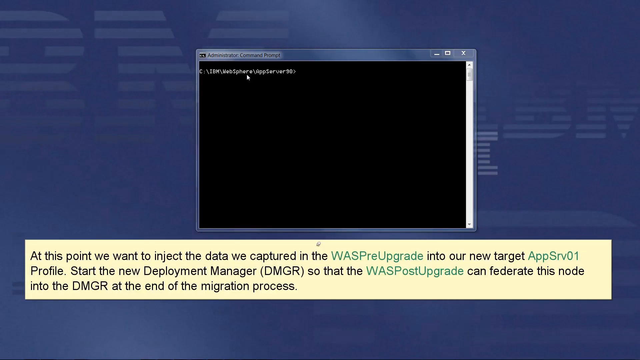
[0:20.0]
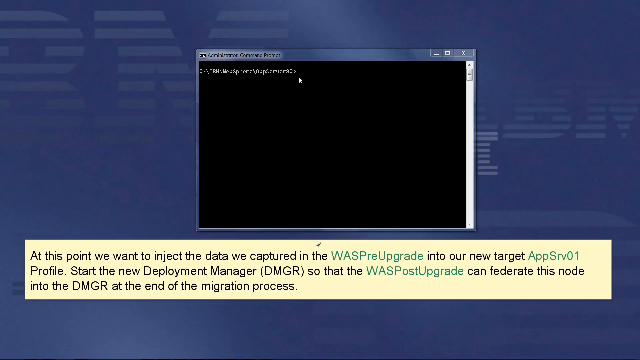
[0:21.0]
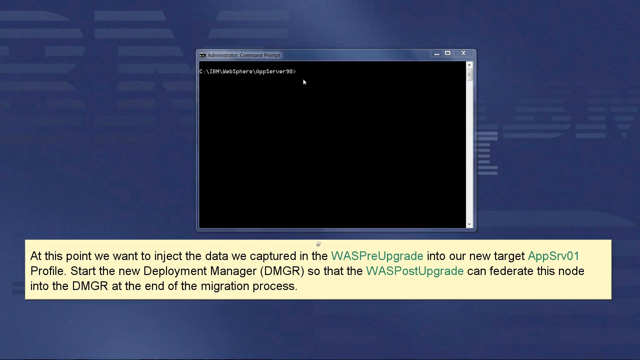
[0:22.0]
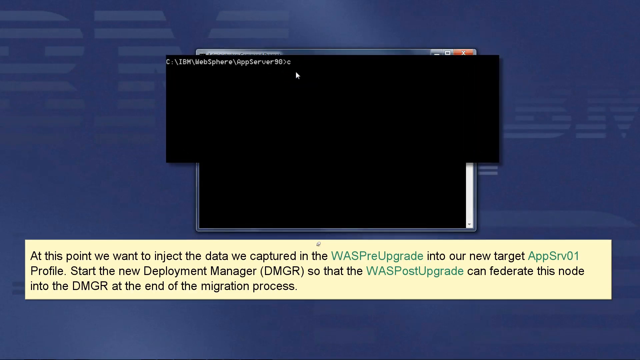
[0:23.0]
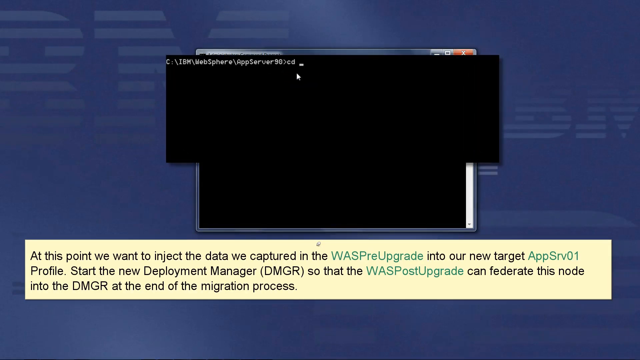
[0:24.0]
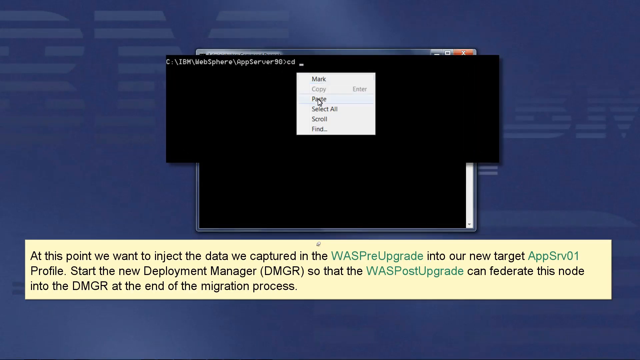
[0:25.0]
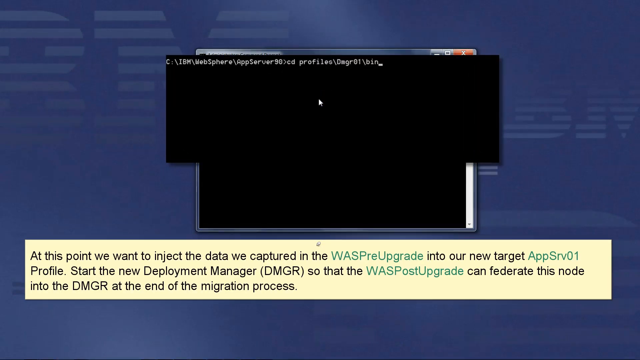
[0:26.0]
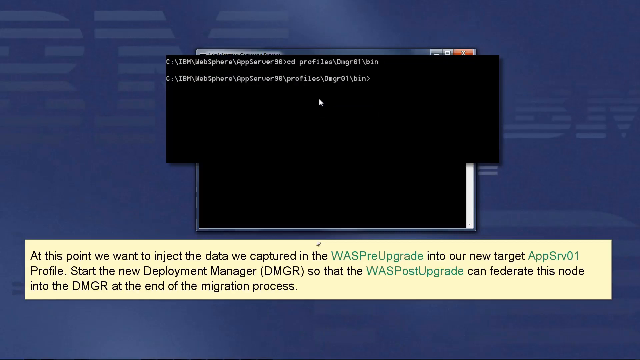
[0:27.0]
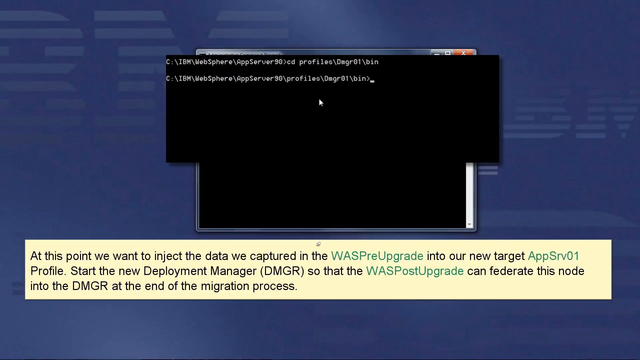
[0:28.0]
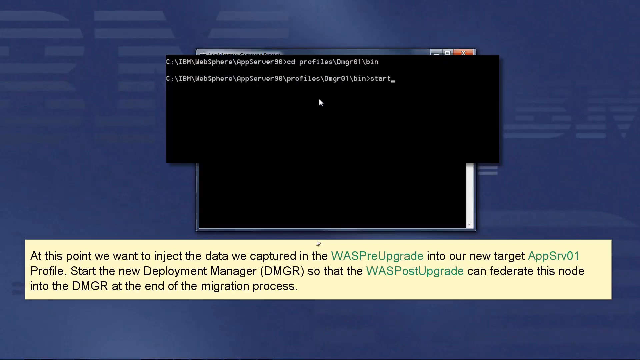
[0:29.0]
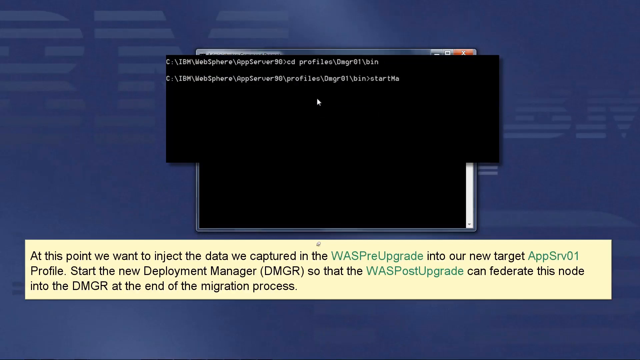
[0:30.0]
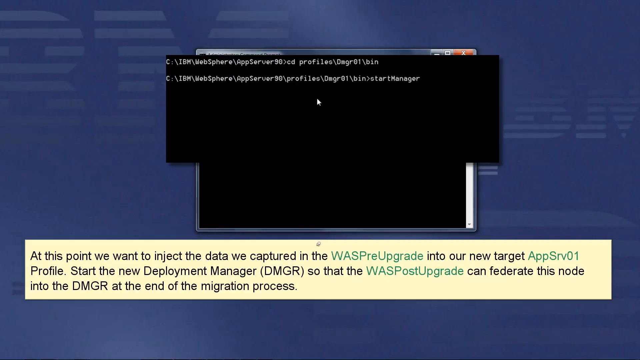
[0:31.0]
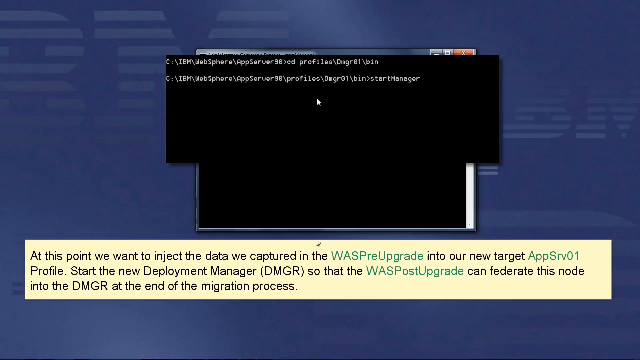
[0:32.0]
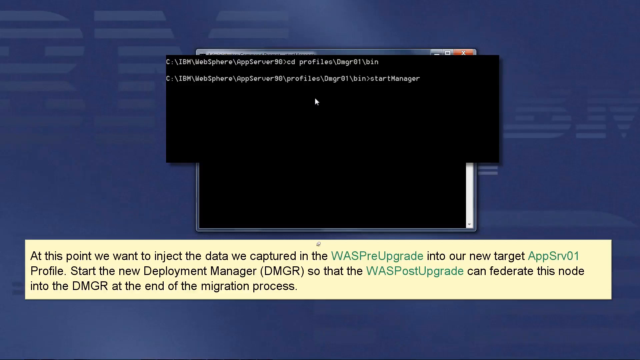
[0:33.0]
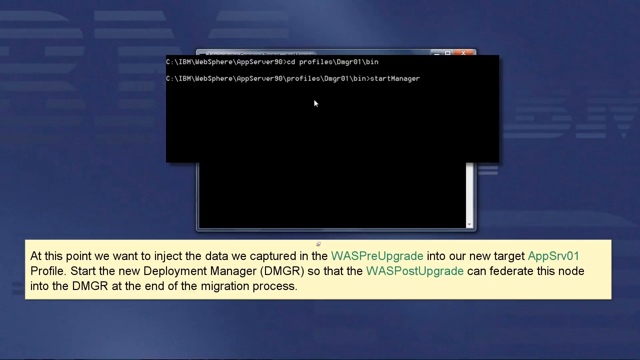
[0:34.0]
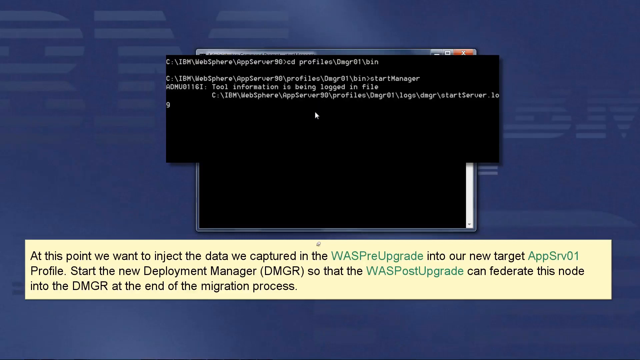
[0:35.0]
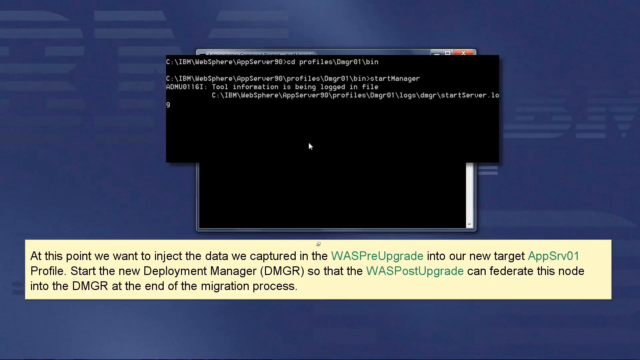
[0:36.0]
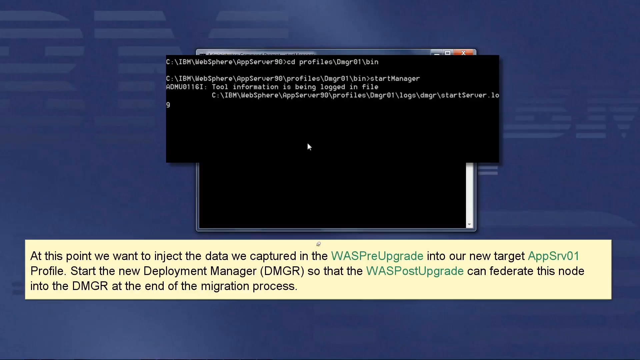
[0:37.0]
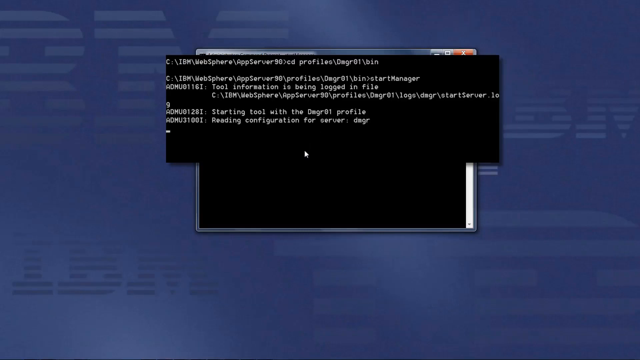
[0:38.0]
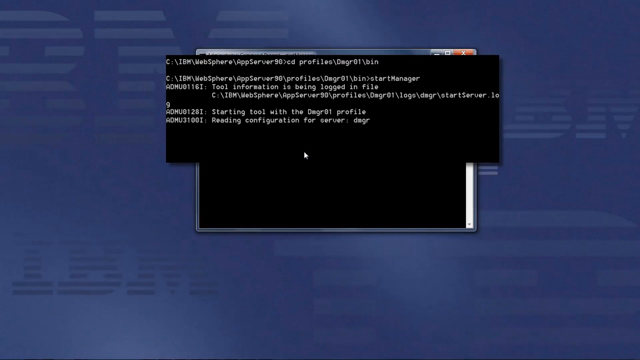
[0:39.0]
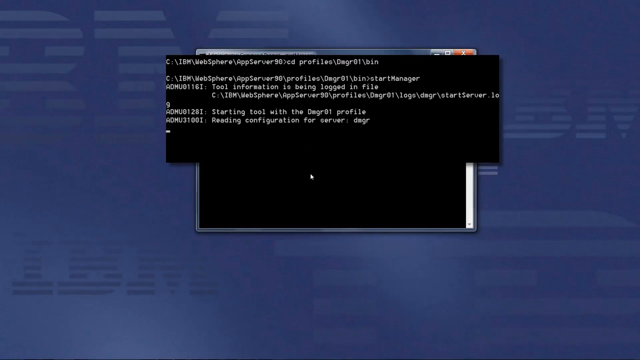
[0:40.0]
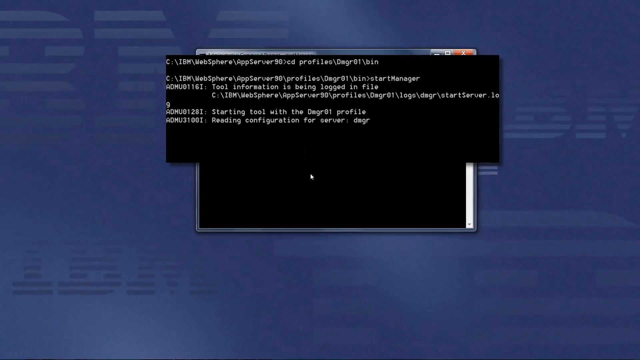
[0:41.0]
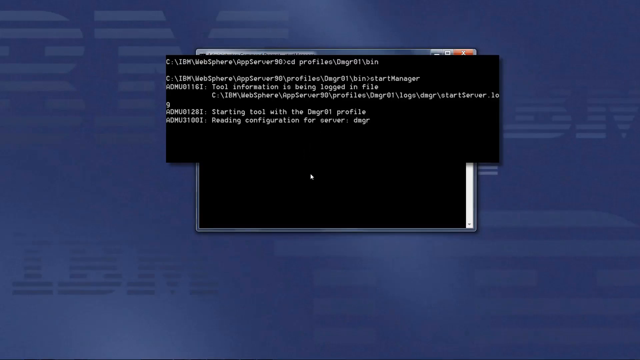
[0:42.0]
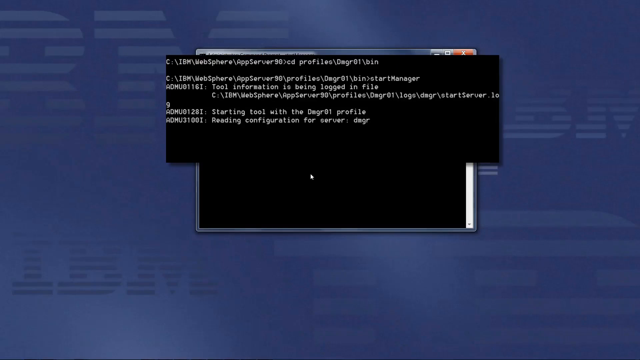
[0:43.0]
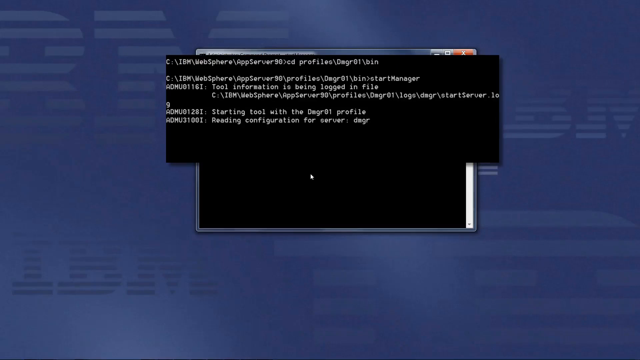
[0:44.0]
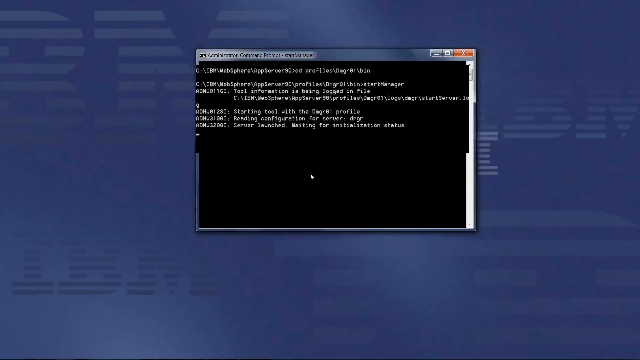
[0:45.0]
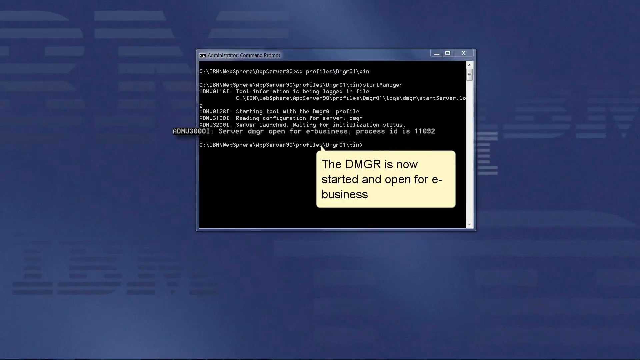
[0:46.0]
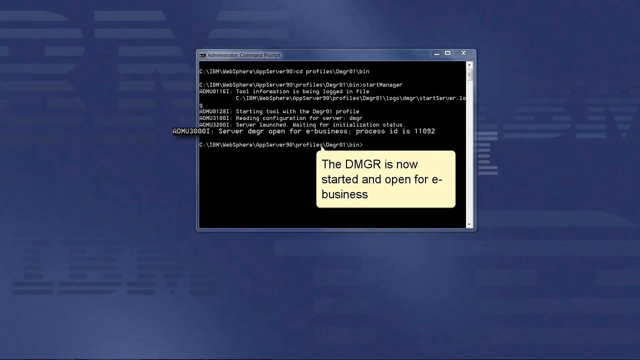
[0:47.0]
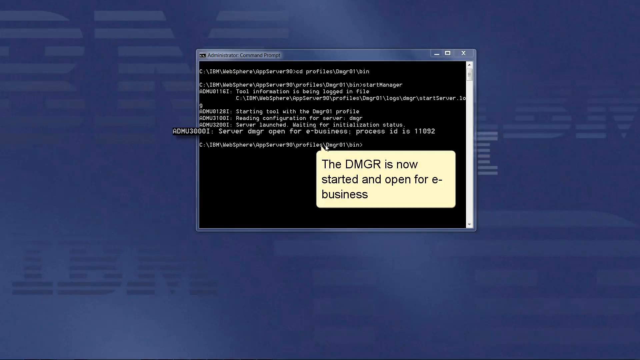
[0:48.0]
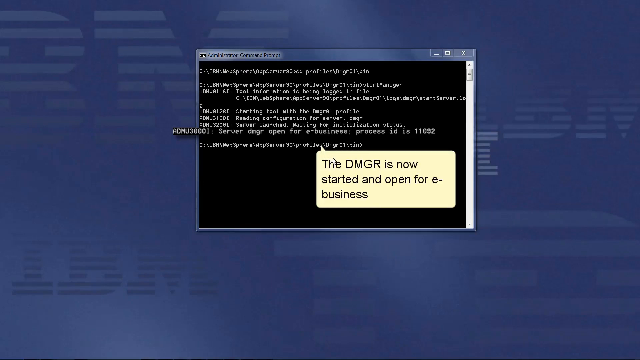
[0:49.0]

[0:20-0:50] The user clicks on the command prompt, and the text line kind of magnifies and pops out a bit for a better look. The user types "cd," then right-clicks and selects paste, and the text "profiles/dmgr01/bin" is pasted into the command prompt. After the user hits enter, the prompt shows they have been moved into the correct directory. They type "startManager" and hit enter, and text appears saying "tool information is being logged in file" followed by the location of the directory. After a short delay, more messages appear: "starting tool" and "reading configuration for server." It pauses for a few more seconds, and then the last message reads "server launched, waiting for initialization status." The magnified rectangle of the command prompt returns to its regular size within the command prompt box. A yellow pop-up speech bubble then appears reading "the dmgr is now started and open for e-business," and the corresponding line in the command prompt is kind of magnified so it becomes bigger and highlighted.